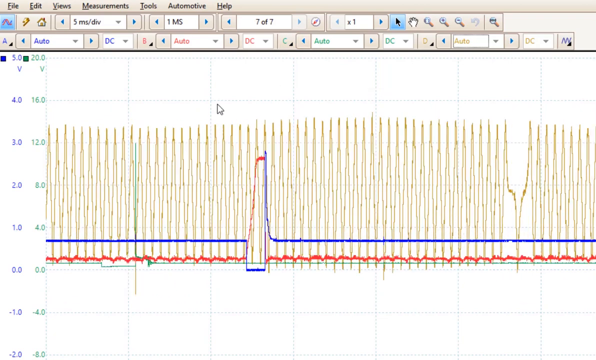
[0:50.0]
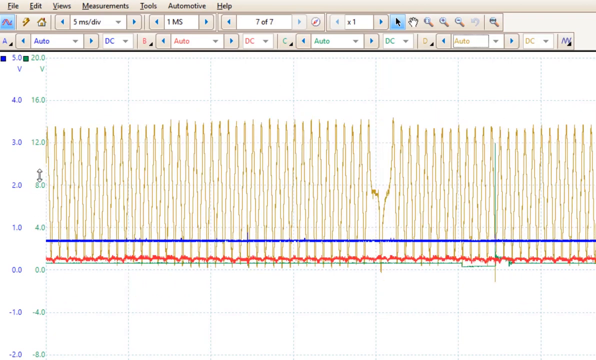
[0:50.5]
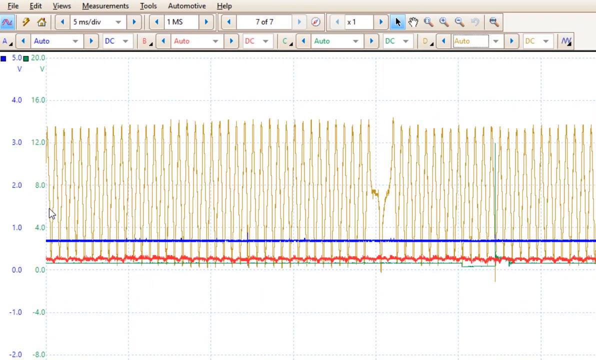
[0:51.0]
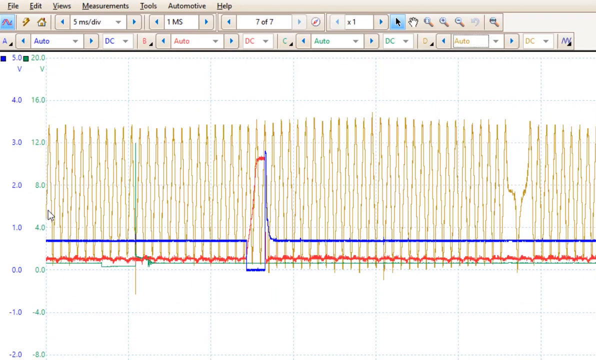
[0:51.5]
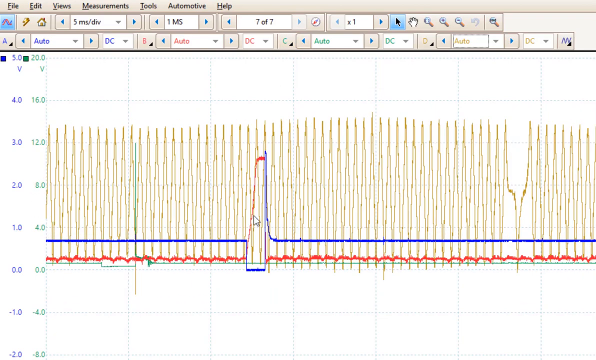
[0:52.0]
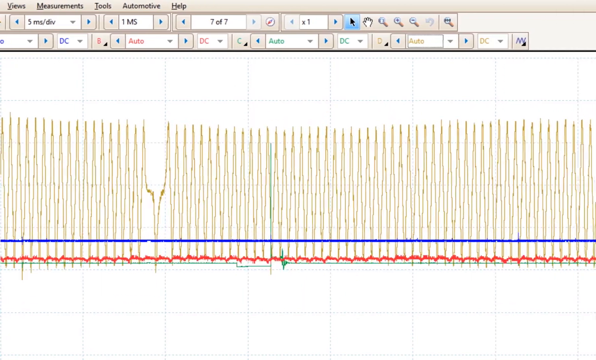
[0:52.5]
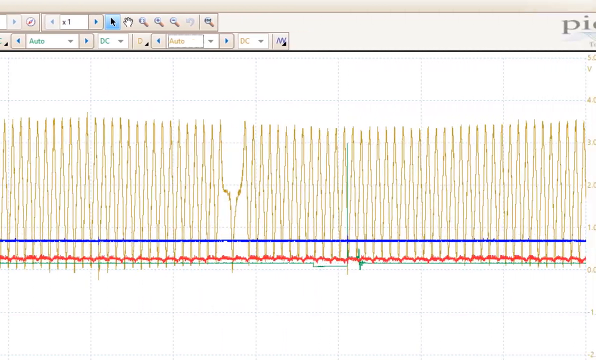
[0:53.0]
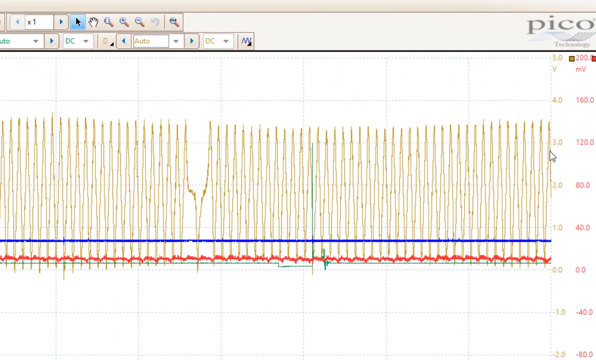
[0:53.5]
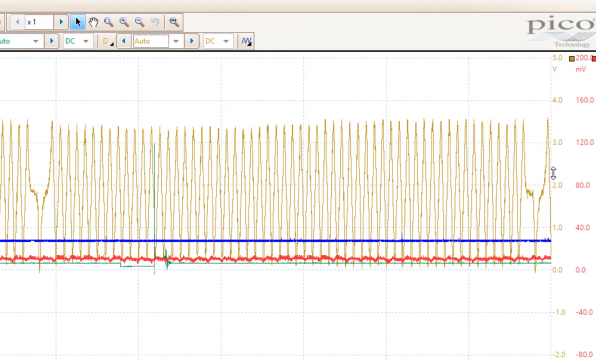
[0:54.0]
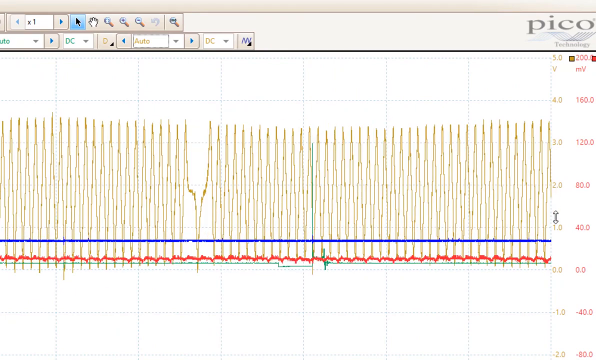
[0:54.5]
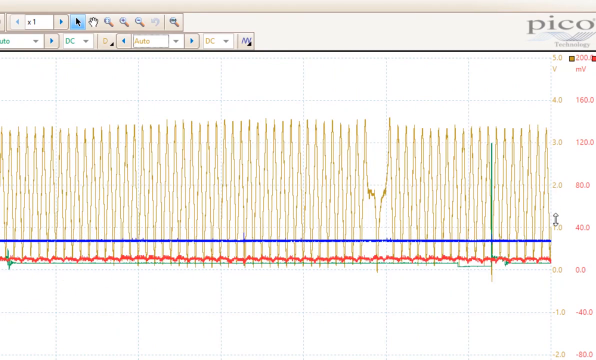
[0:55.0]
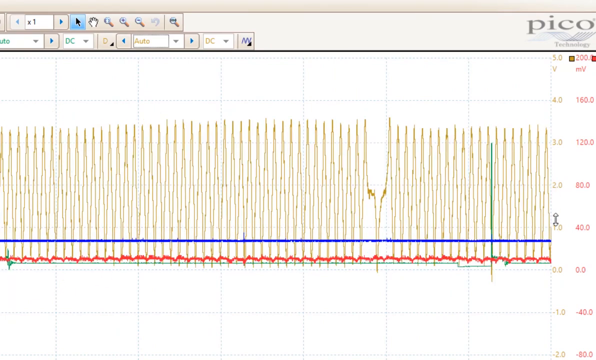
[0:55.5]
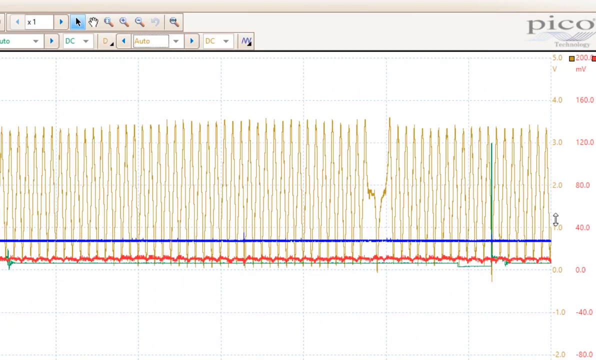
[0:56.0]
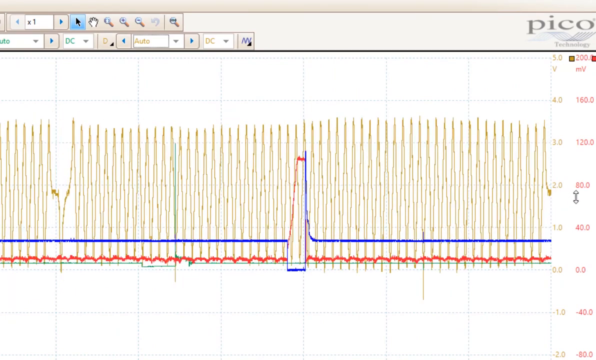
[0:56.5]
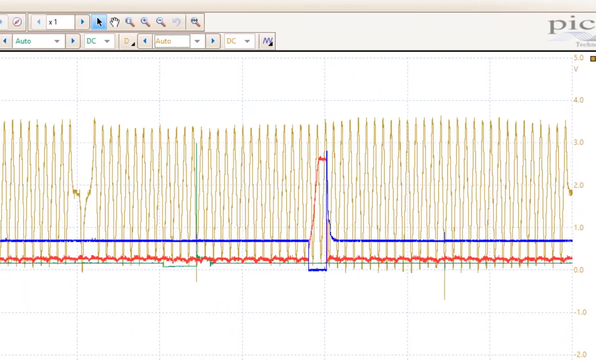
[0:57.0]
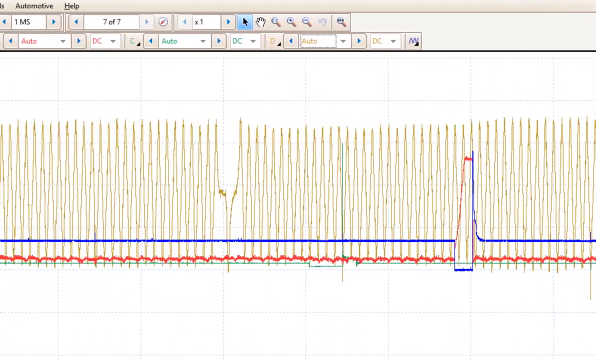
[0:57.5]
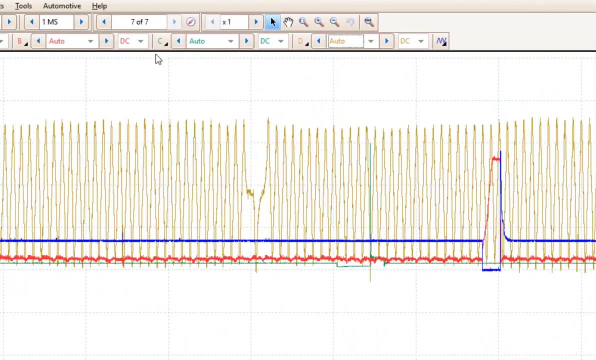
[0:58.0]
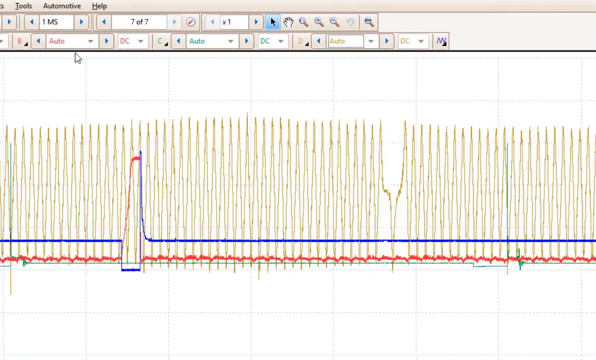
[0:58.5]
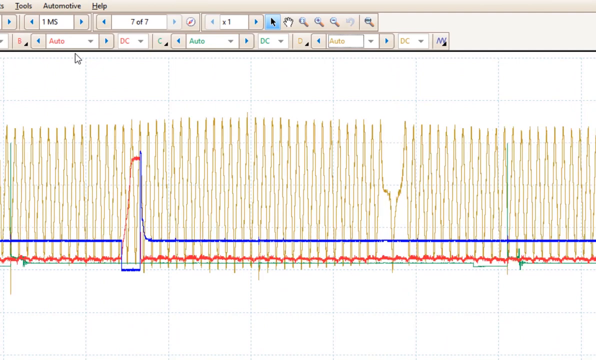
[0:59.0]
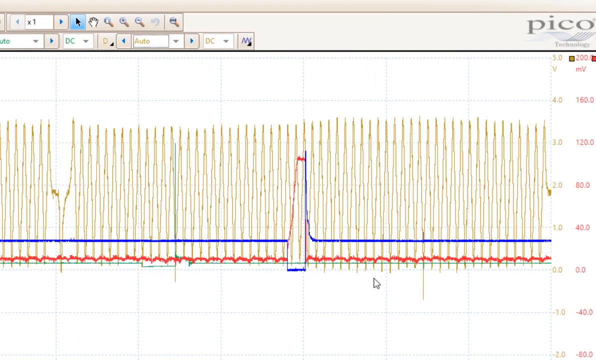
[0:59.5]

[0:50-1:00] The user turns the yellow line, associated with the letter D, on auto, while the rest are already on auto: letter C, associated with green; letter B, associated with red; and letter A, associated with blue. The C line is much straighter than the others, while the D line is quite the opposite, and the B and A lines are in the middle of the spectrum. The user then shows the scales on the left-hand side, which show green and blue, and moves on to the right side, which shows the scales for yellow and red. The user tries to change the scale, but the values do not change; the lines stay the same size and their shapes do not change.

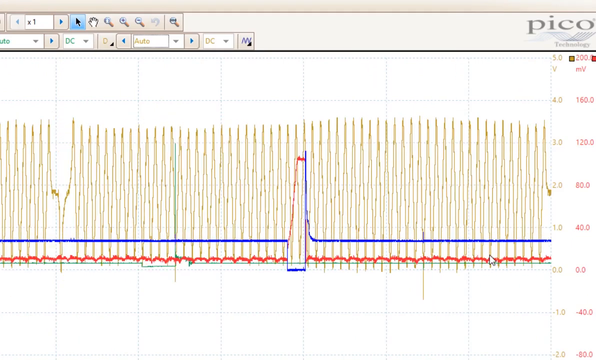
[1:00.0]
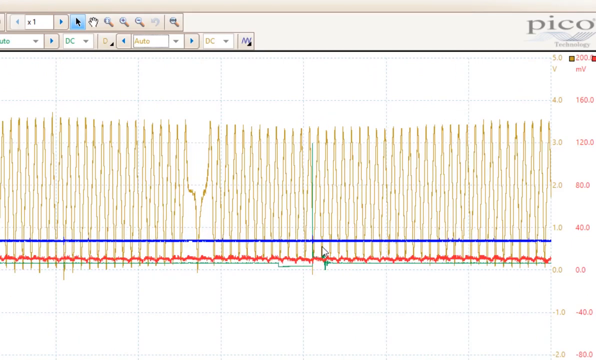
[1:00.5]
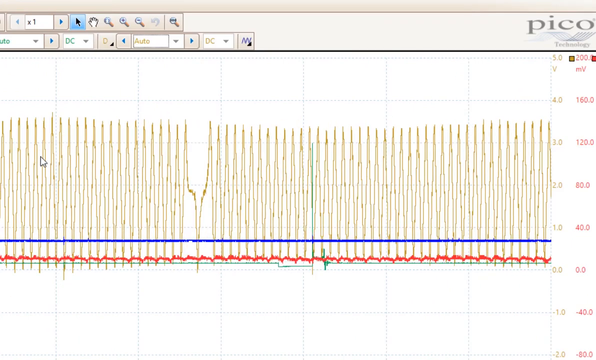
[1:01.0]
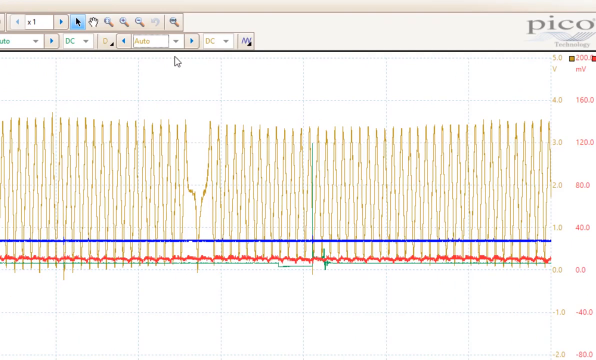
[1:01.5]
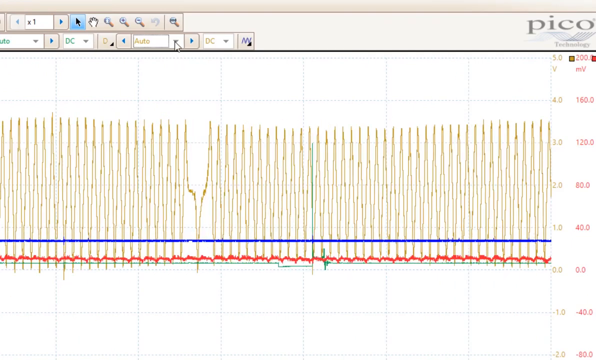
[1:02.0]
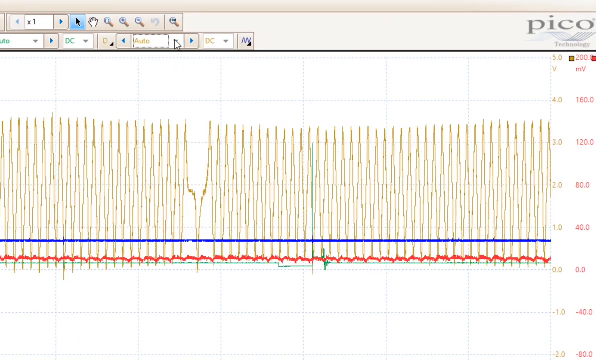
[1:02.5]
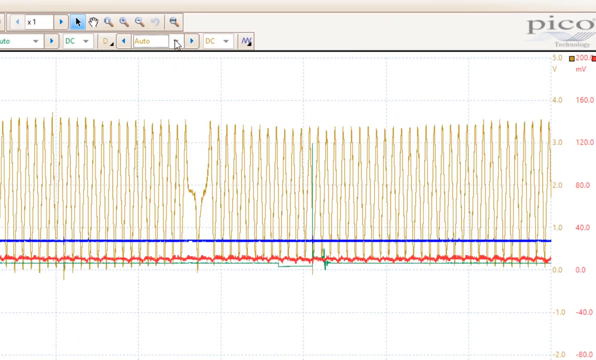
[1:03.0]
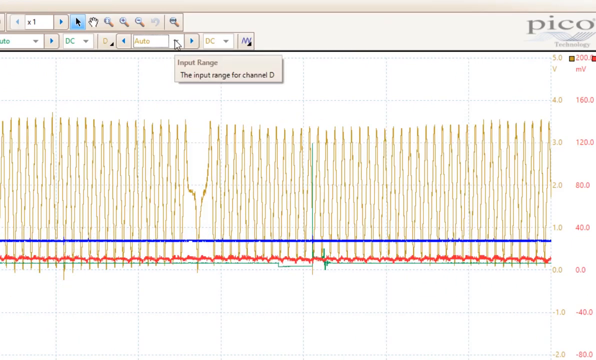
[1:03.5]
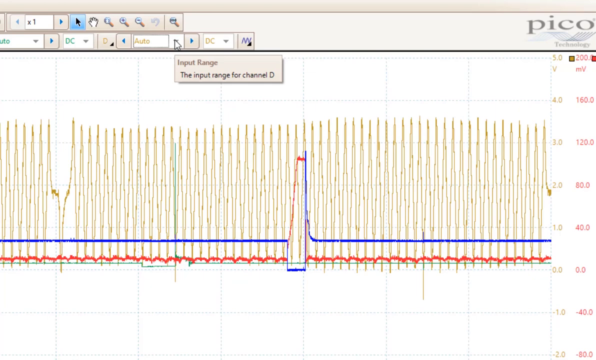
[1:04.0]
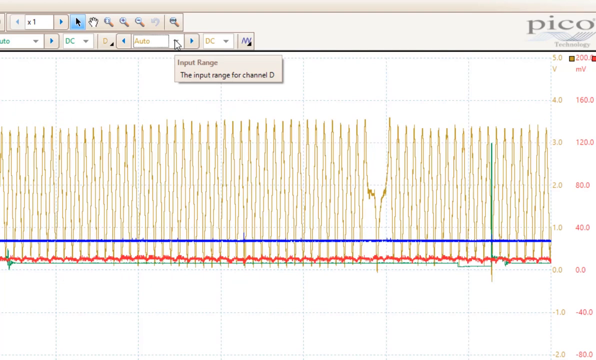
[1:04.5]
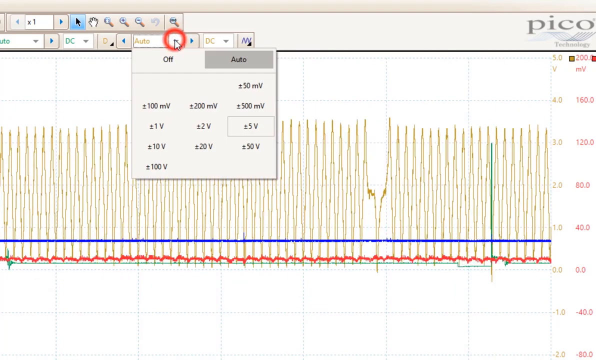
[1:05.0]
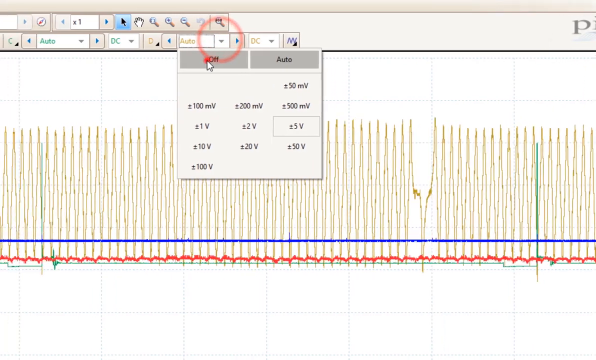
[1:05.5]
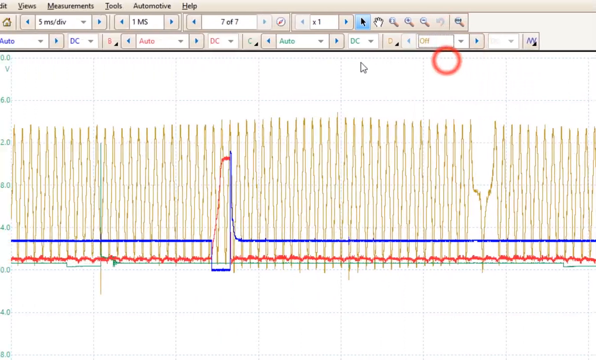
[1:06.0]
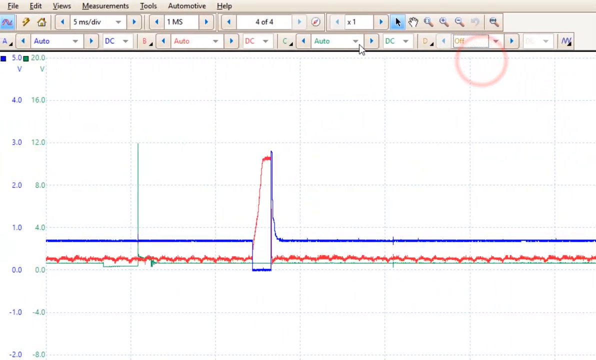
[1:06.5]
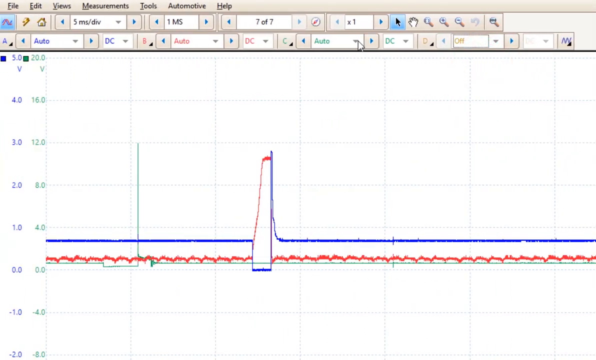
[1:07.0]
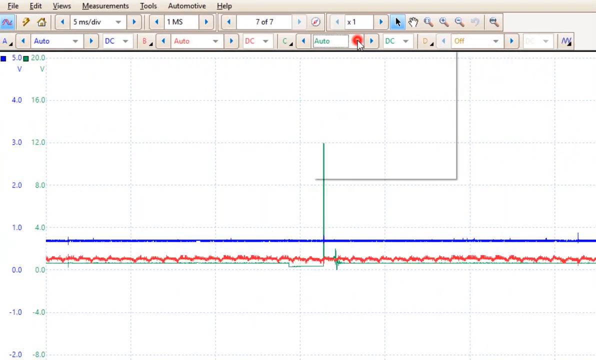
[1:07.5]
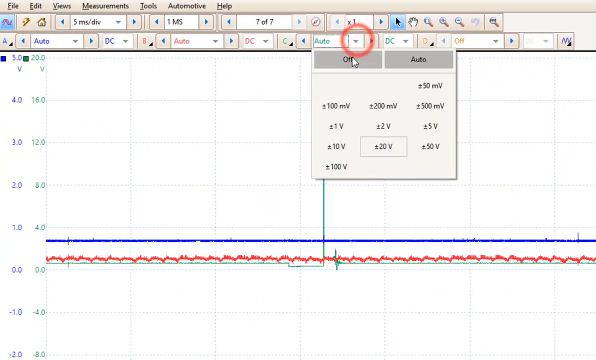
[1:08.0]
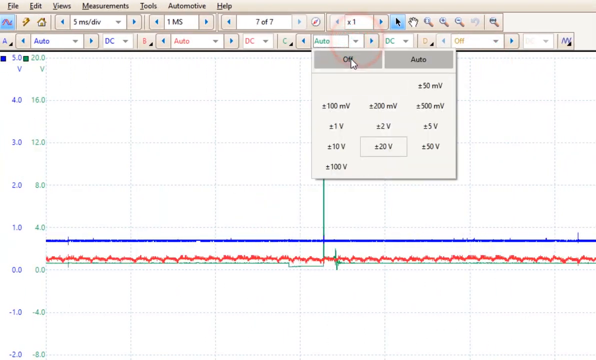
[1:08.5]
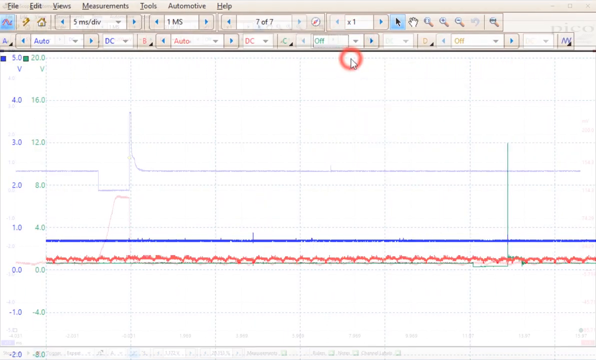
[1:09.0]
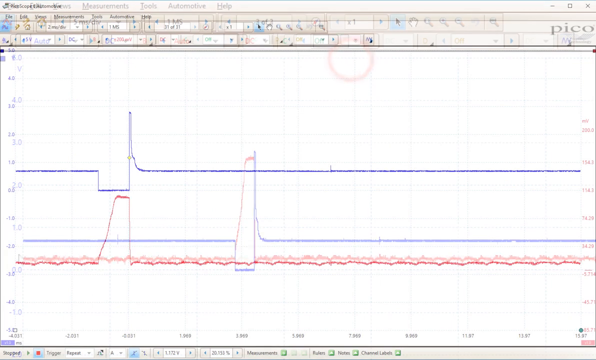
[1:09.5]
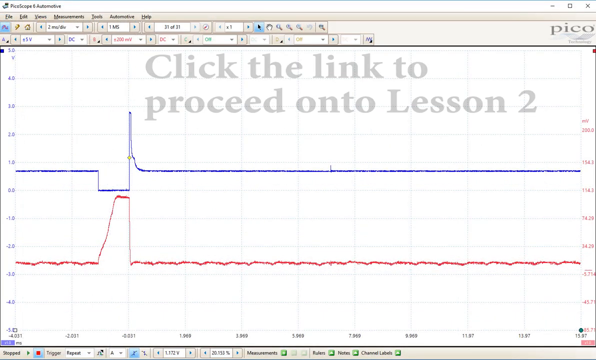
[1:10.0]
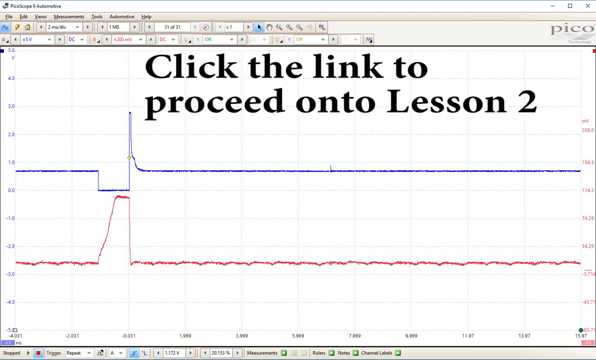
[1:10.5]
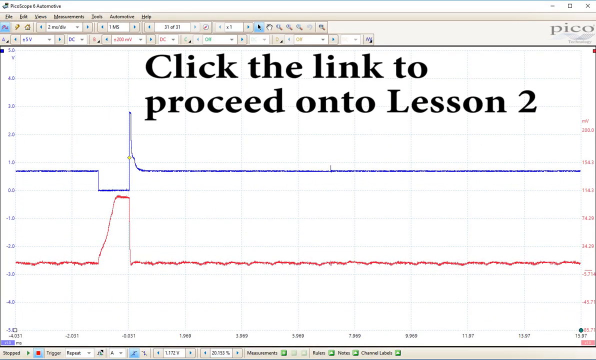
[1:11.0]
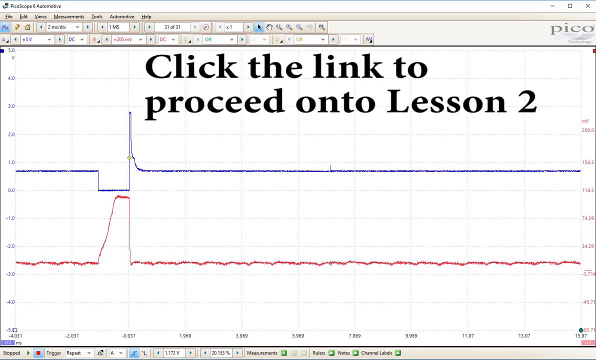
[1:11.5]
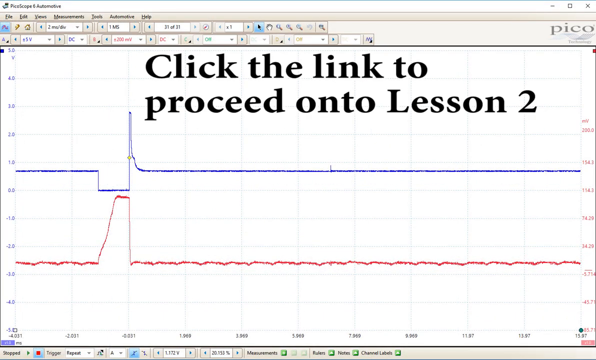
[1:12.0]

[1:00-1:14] The user hovers the mouse over the letter D and turns off the D line, the yellow line. The user then goes to the letter C, associated with the green line, and switches it from auto to off. In the top right of the chart is "PyGo". An overlay appears on top of the chart with the words "click the link to proceed onto Lesson 2". Two lines remain on the chart, a red line and a blue line, which are parallel and do not meet, connected to the letters A and B.